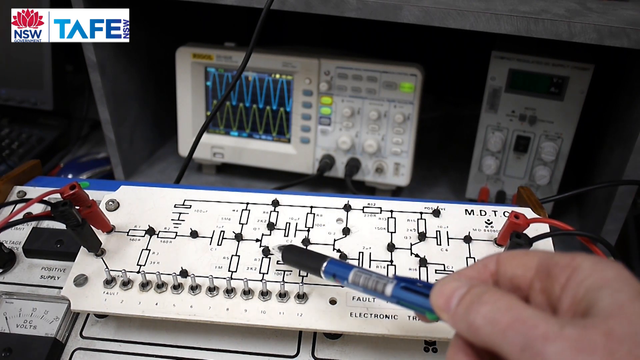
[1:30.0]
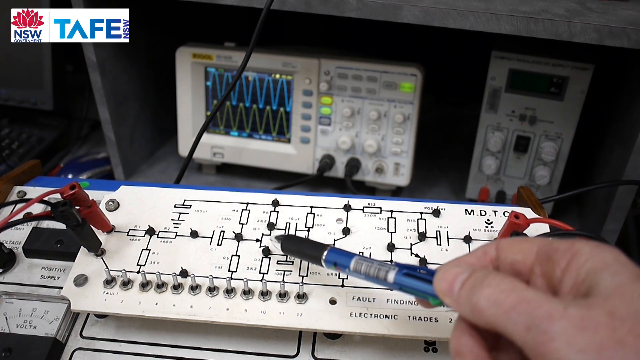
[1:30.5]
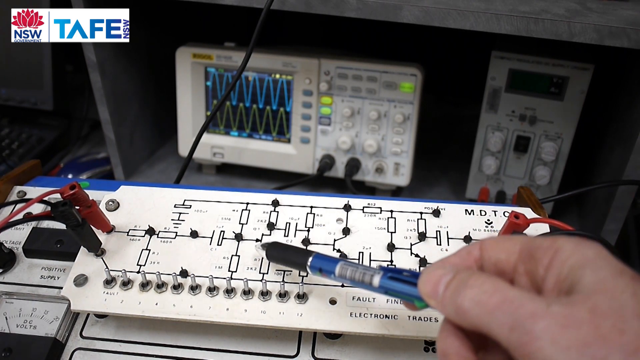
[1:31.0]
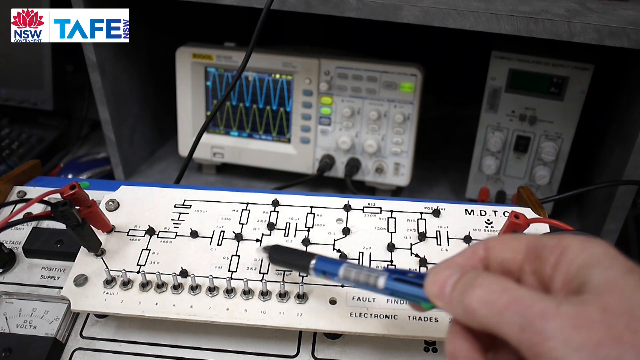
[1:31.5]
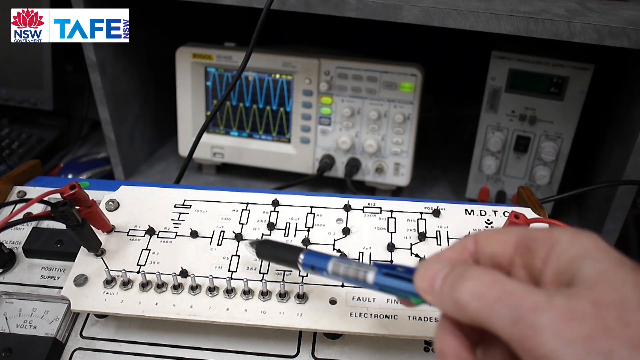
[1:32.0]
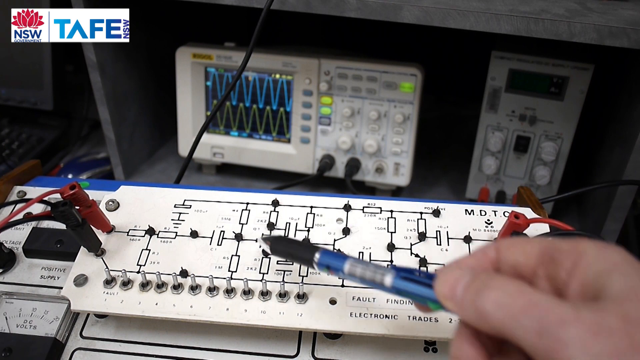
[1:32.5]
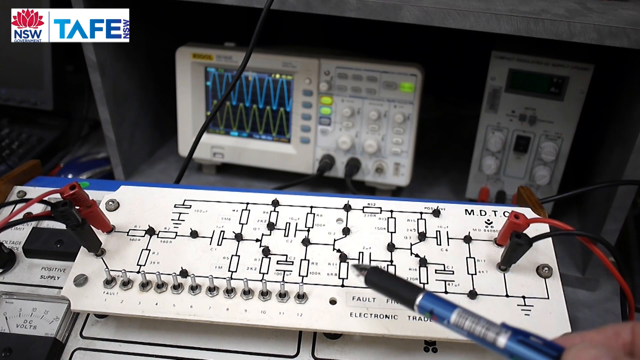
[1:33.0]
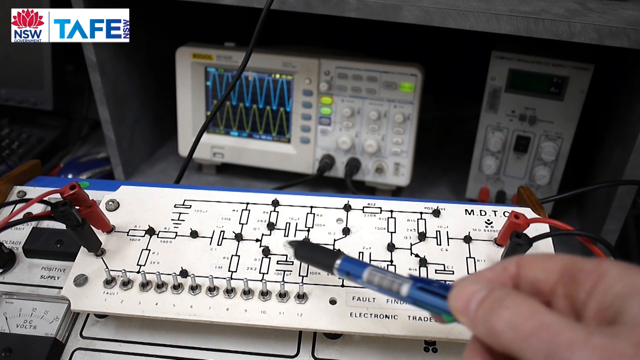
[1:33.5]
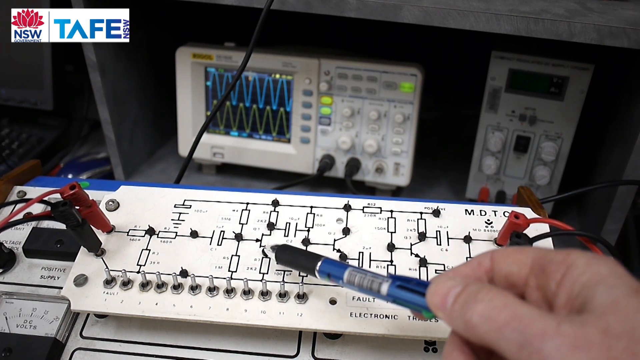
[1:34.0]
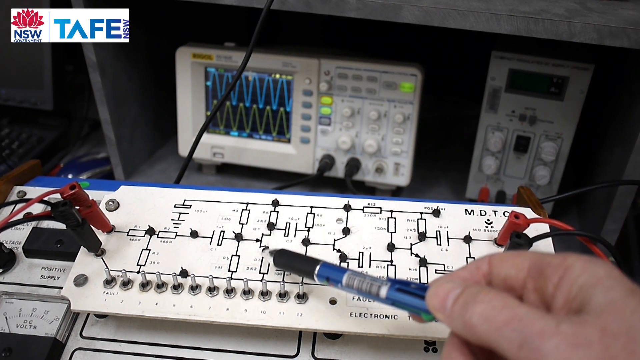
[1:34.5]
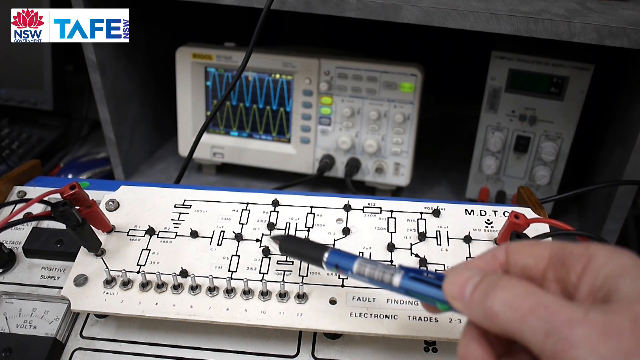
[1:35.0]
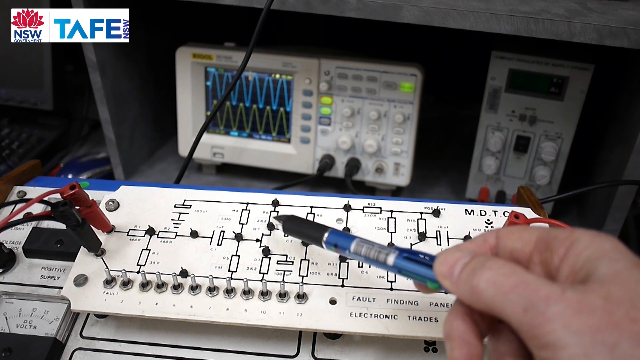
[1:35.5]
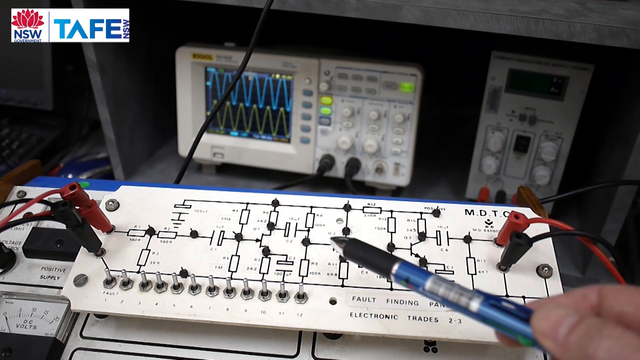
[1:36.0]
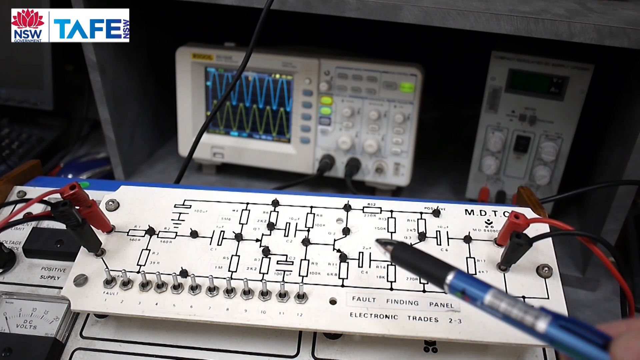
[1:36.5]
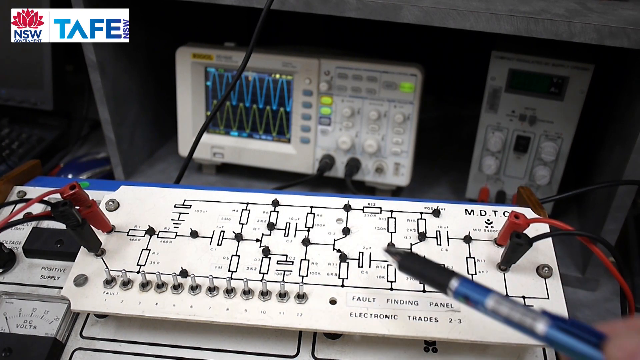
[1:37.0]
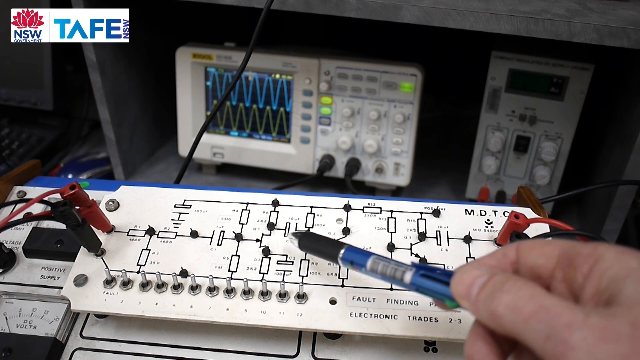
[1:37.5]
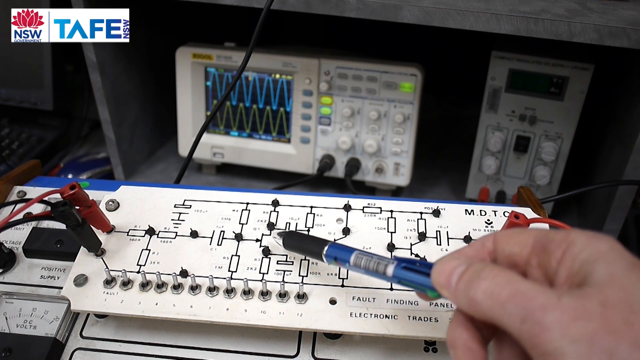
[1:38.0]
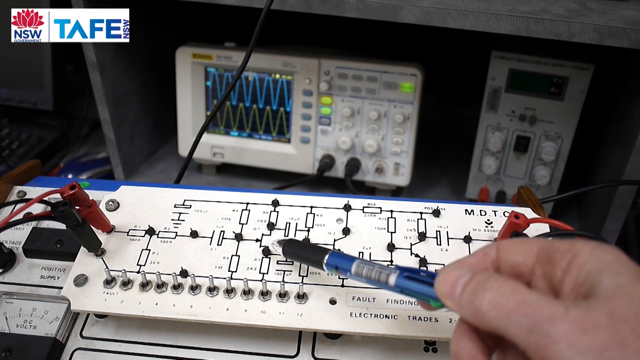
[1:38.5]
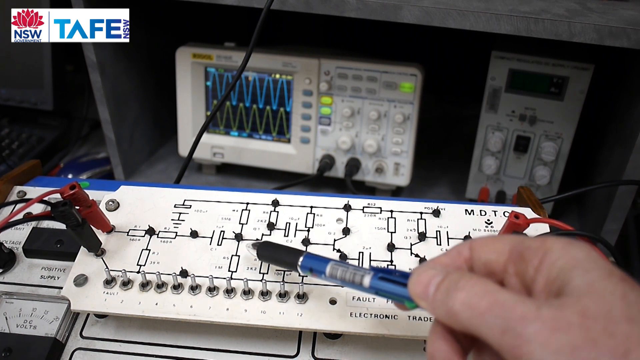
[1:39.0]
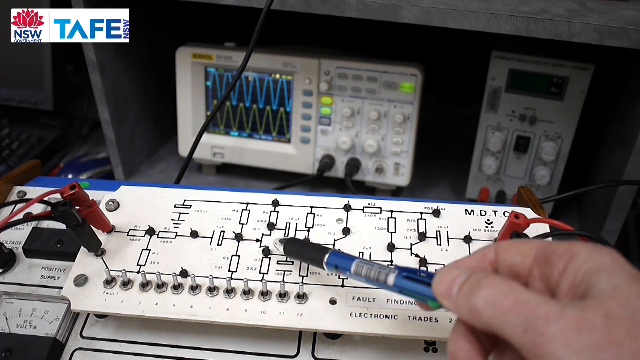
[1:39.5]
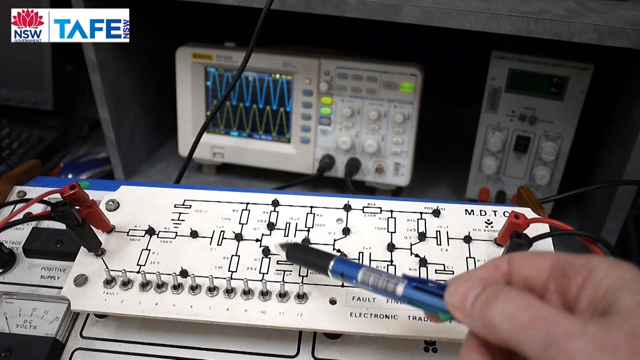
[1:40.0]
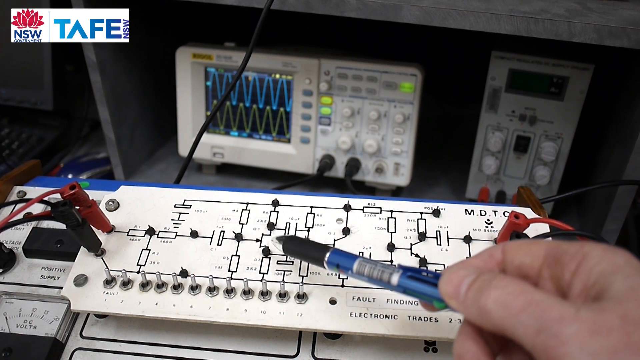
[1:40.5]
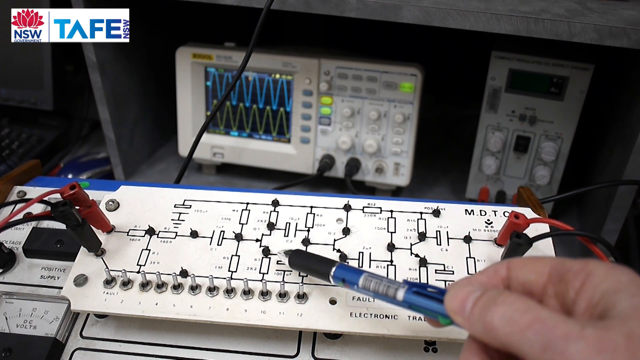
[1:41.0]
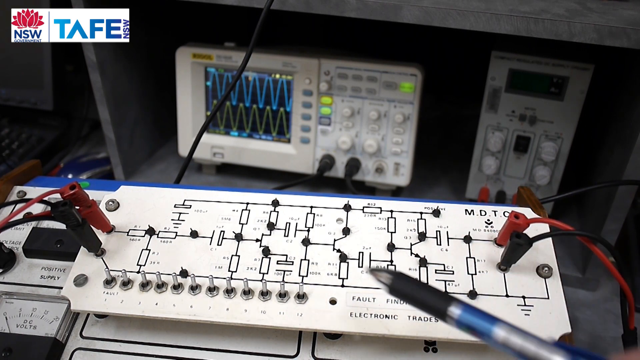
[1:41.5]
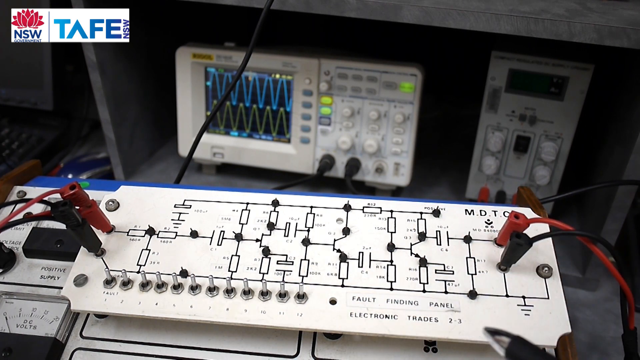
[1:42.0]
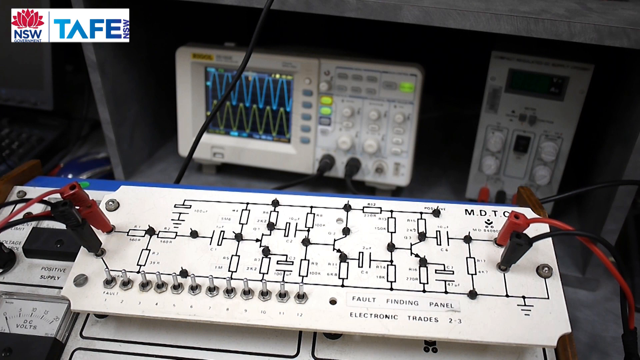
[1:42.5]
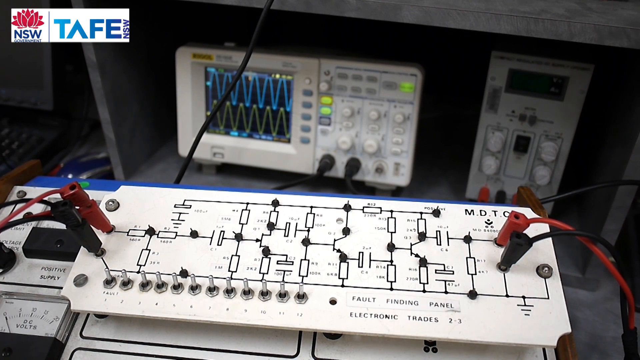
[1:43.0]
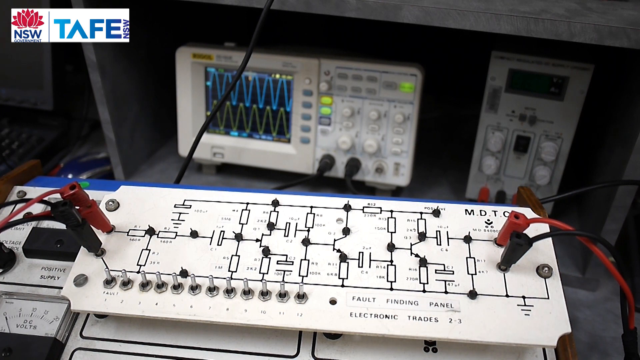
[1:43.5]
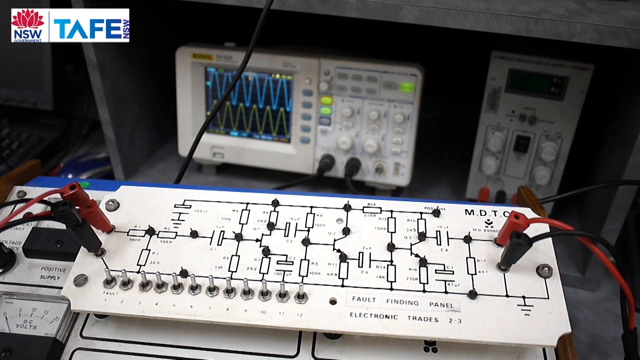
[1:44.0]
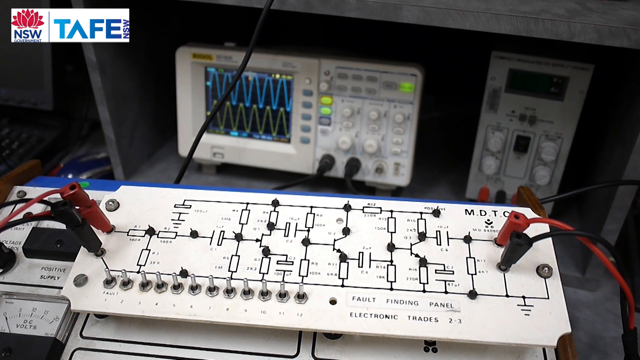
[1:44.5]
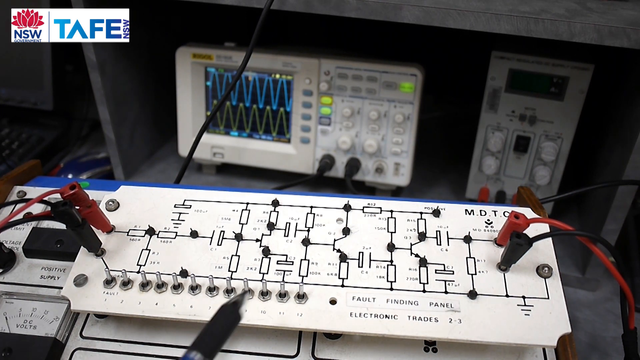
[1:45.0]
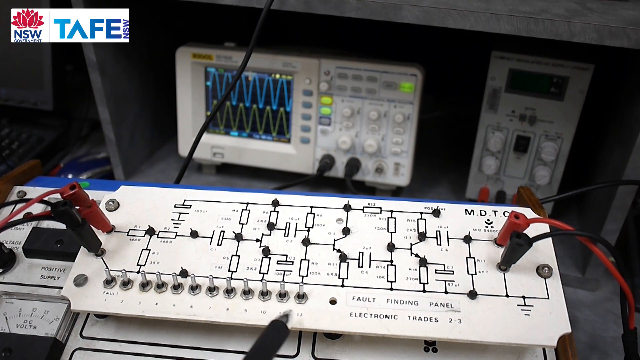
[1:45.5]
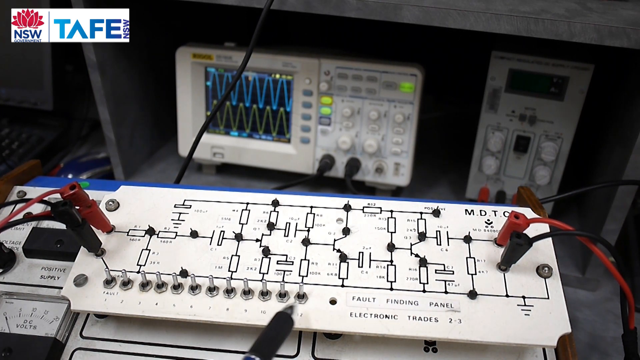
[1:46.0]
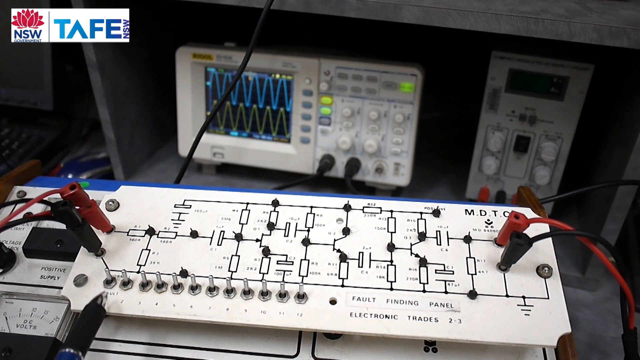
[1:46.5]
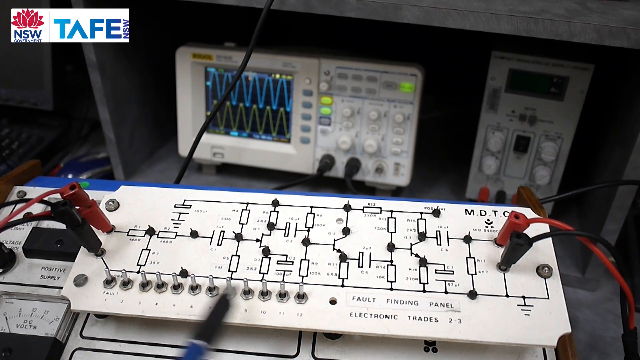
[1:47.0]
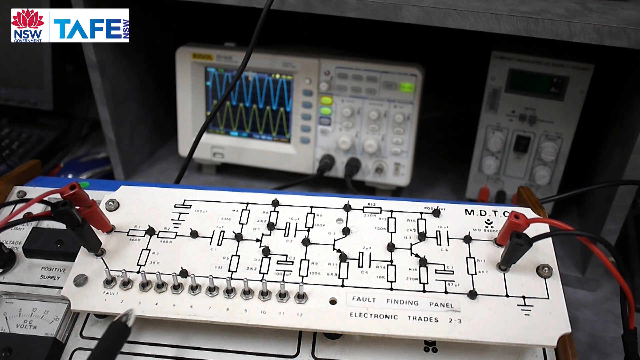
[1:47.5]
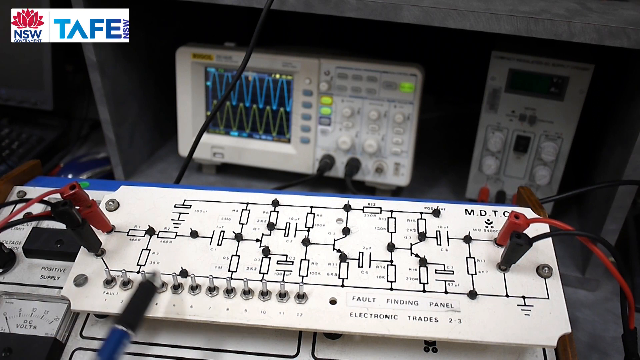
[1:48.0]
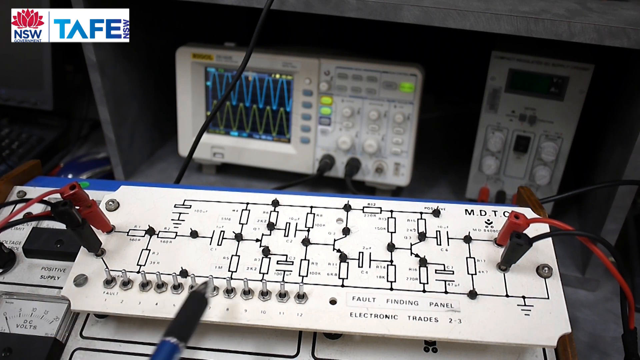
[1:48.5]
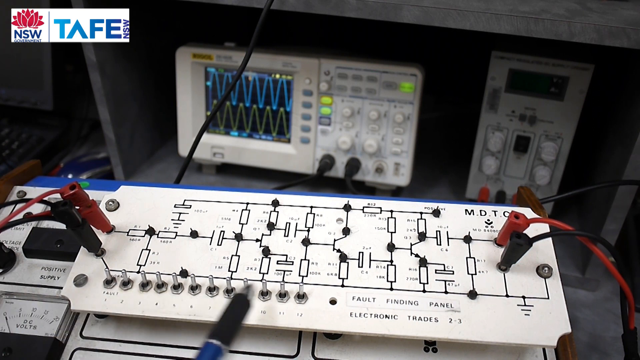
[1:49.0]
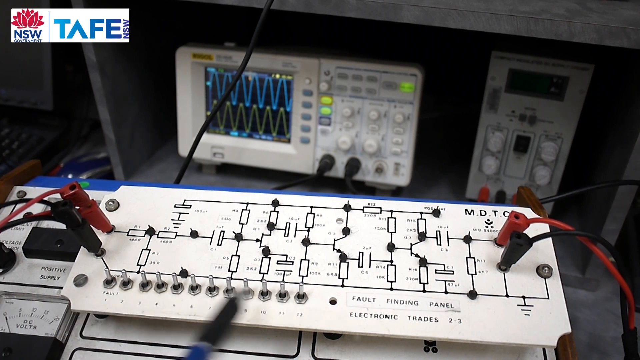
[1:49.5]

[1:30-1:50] The white panel has a red wire and a black wire plugged in on the left and a red wire and a black wire plugged in on the right. There is a blue border right at the top of the panel, and from it a thin black wire goes upward on the screen. Right behind the flat panel is an upright box with large white knobs and little white knobs, and a few lit-up buttons in fluorescent yellow and fluorescent green. Its screen shows blue wavy lines with yellow wavy lines below. Next to the horizontal box there is a little space, and then a vertical standing white box.